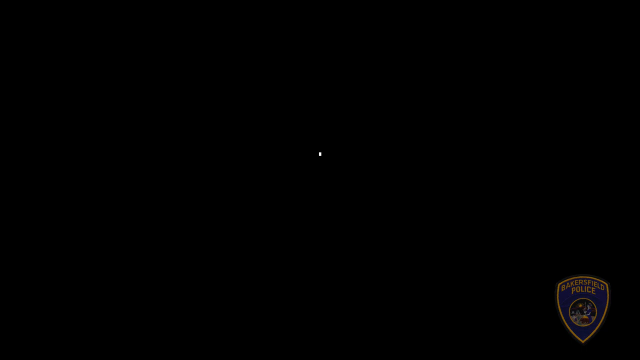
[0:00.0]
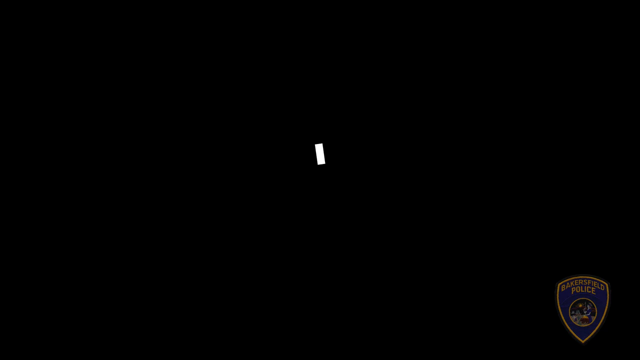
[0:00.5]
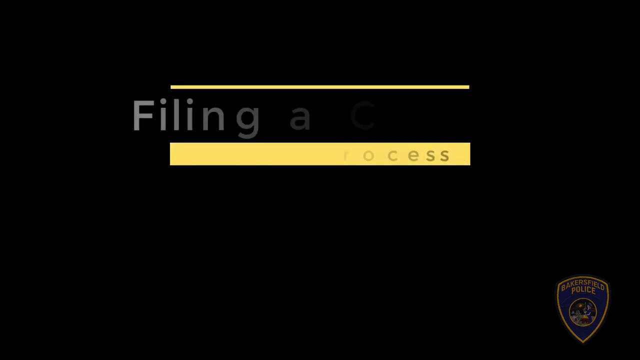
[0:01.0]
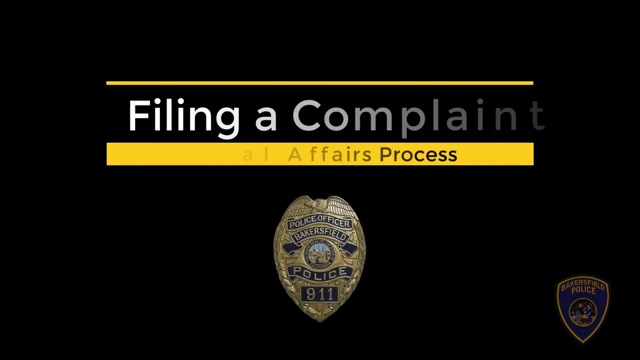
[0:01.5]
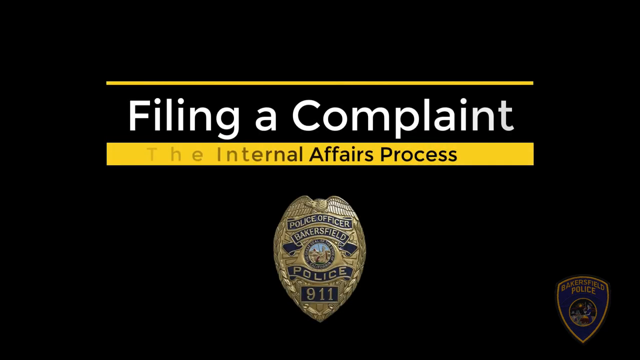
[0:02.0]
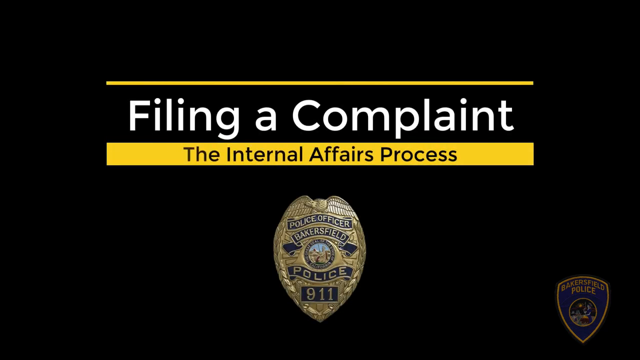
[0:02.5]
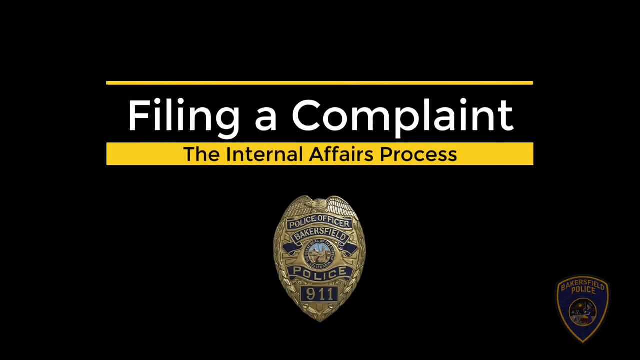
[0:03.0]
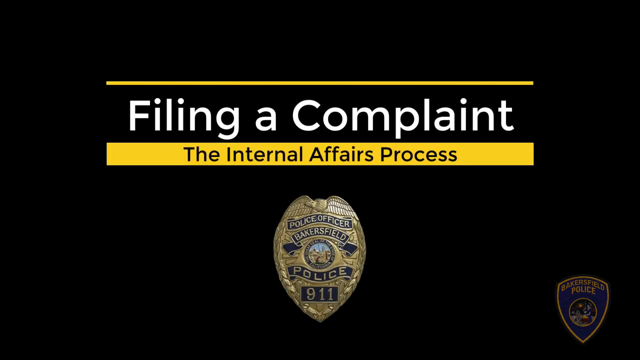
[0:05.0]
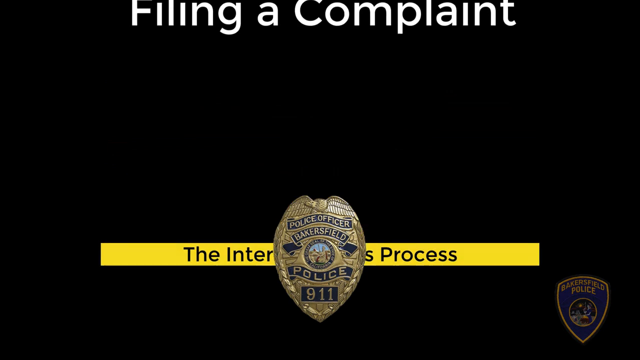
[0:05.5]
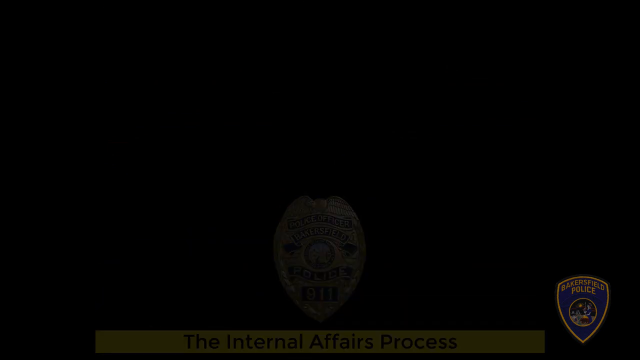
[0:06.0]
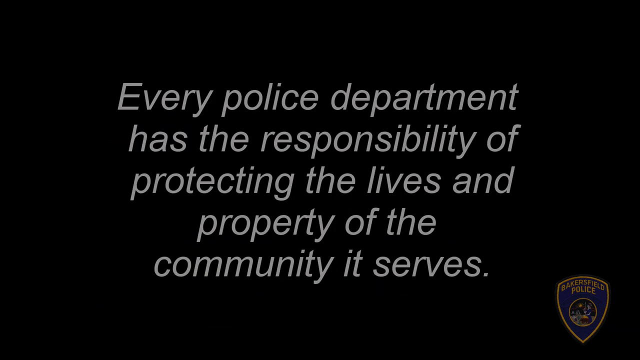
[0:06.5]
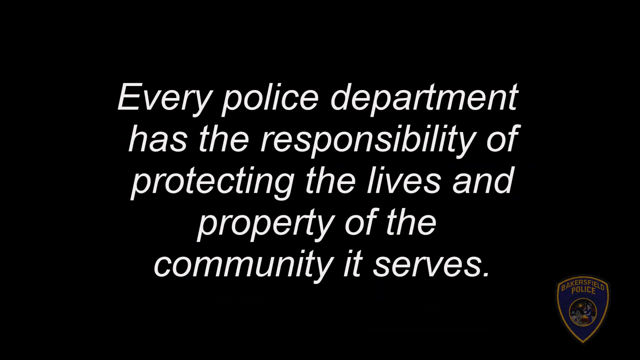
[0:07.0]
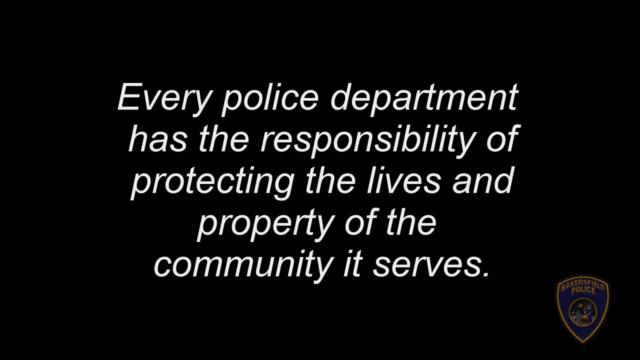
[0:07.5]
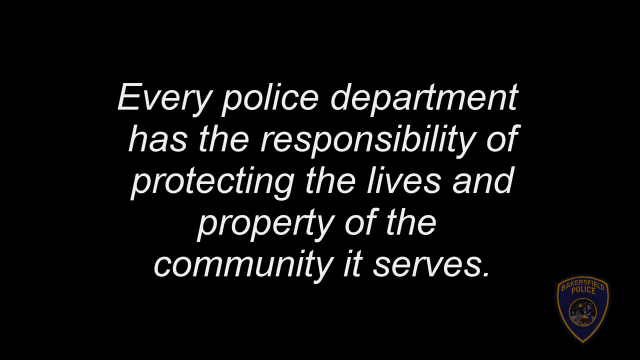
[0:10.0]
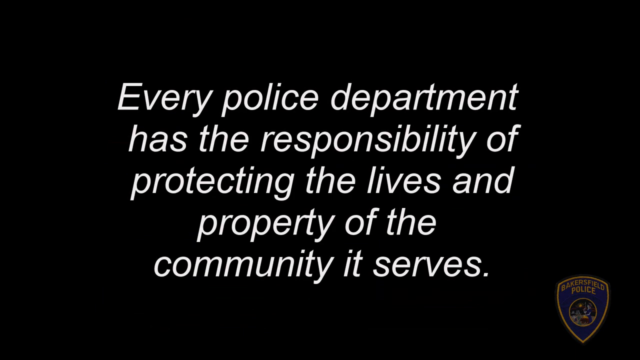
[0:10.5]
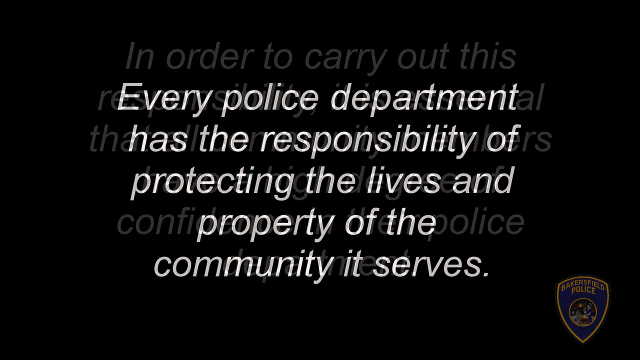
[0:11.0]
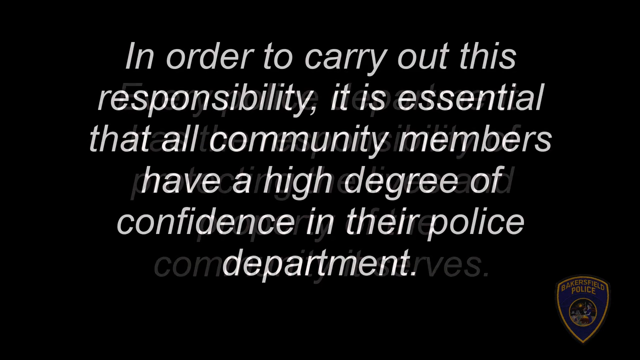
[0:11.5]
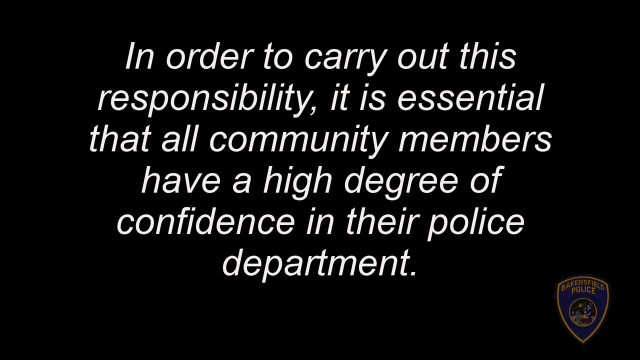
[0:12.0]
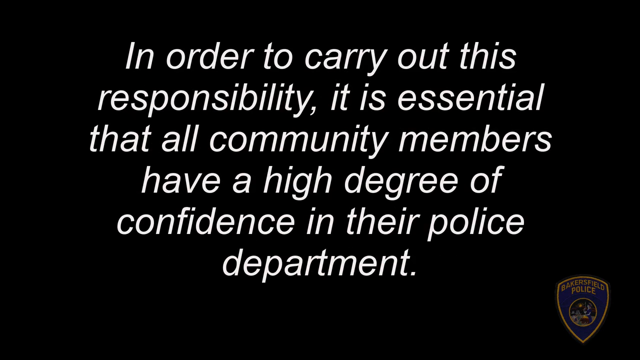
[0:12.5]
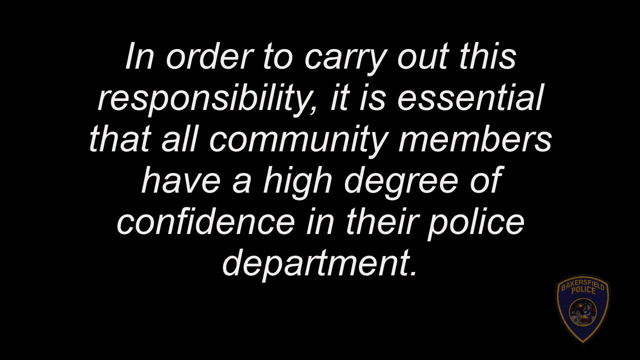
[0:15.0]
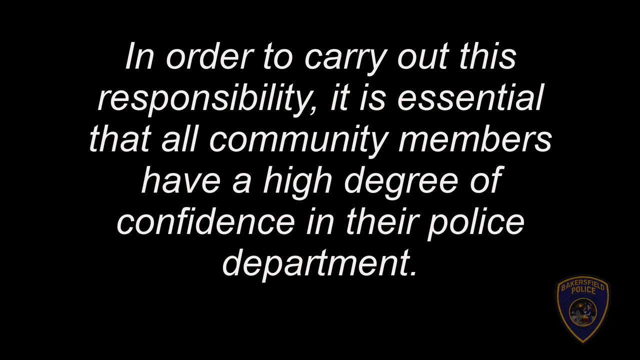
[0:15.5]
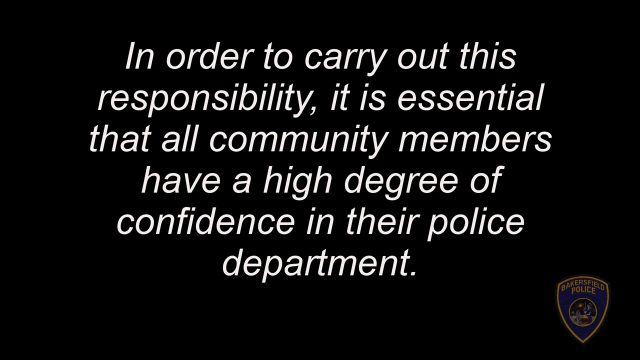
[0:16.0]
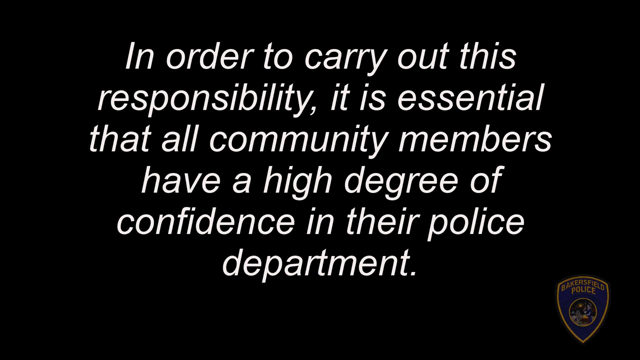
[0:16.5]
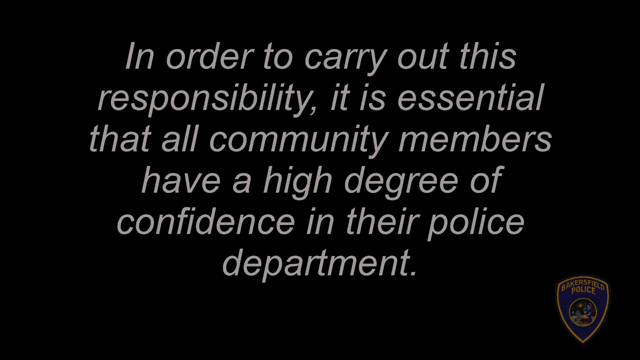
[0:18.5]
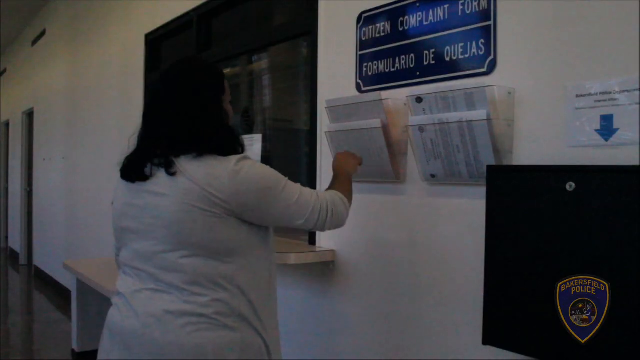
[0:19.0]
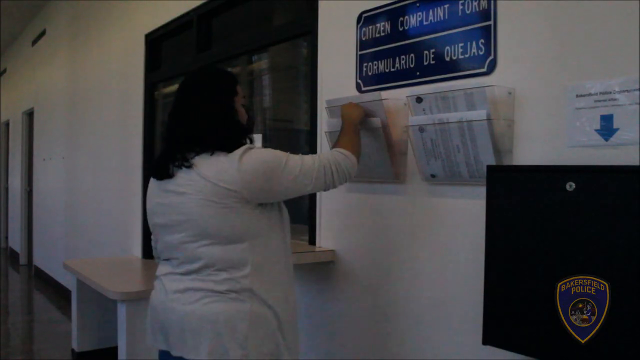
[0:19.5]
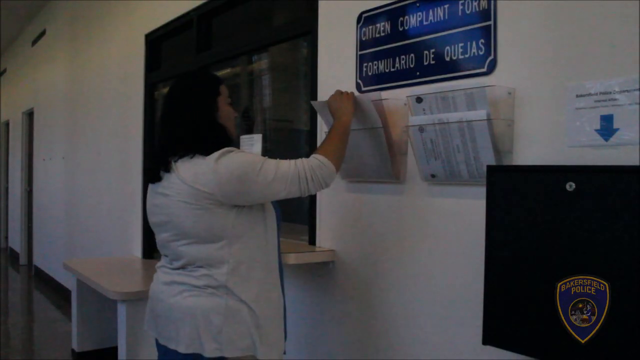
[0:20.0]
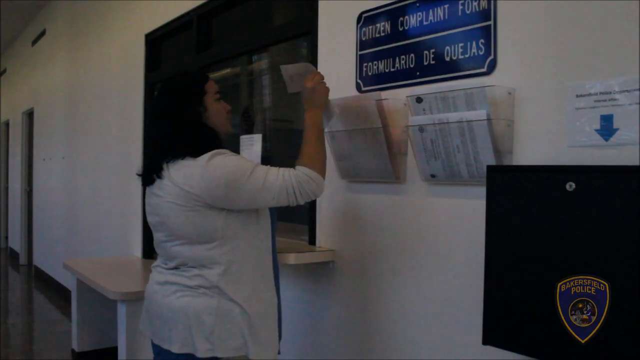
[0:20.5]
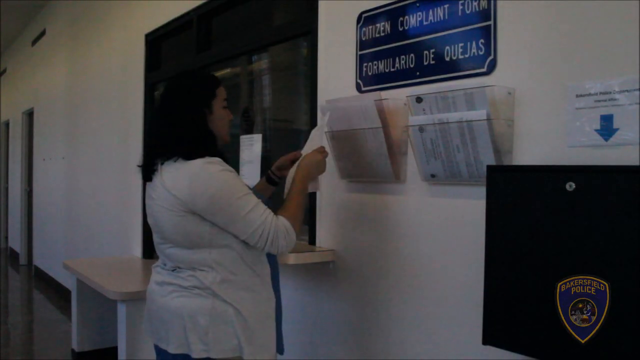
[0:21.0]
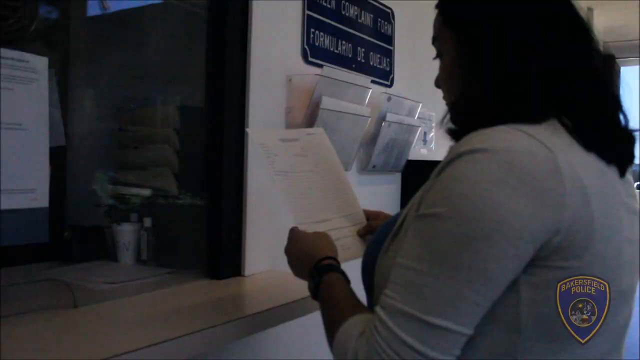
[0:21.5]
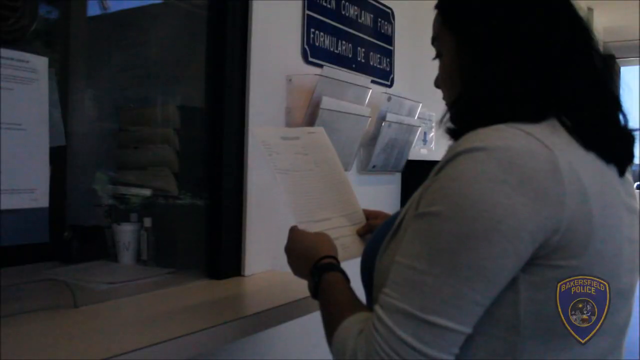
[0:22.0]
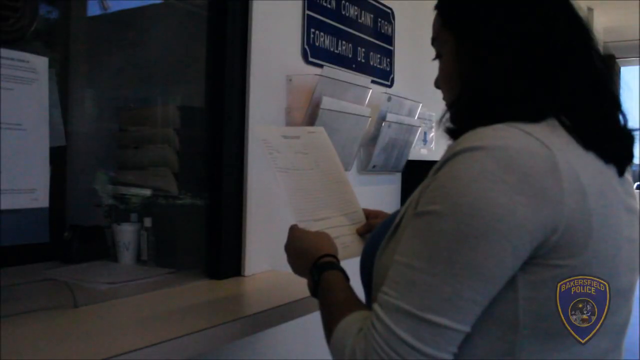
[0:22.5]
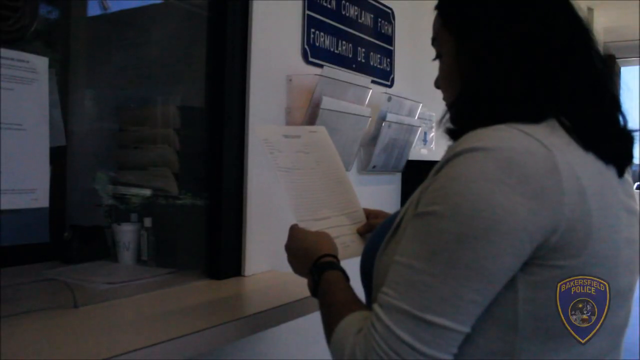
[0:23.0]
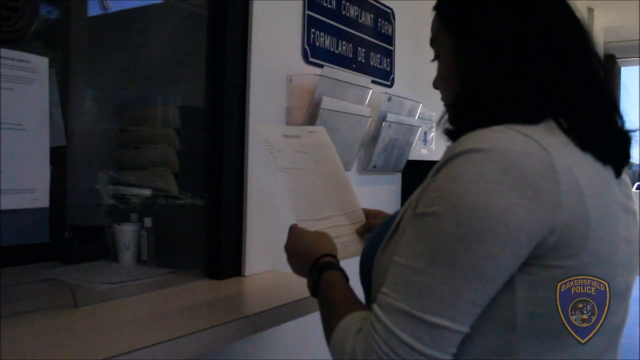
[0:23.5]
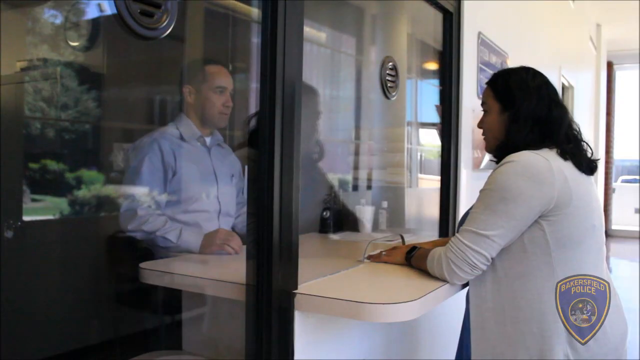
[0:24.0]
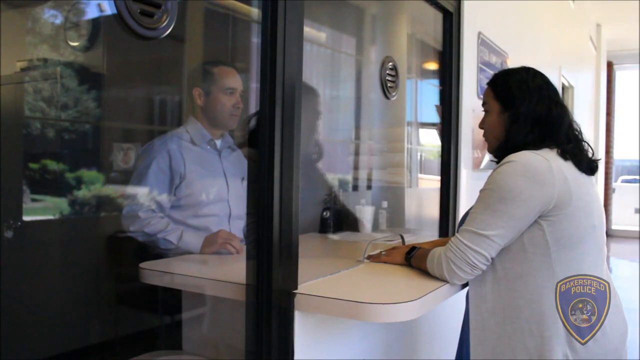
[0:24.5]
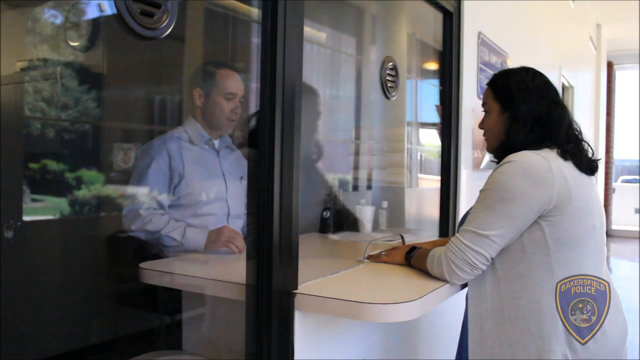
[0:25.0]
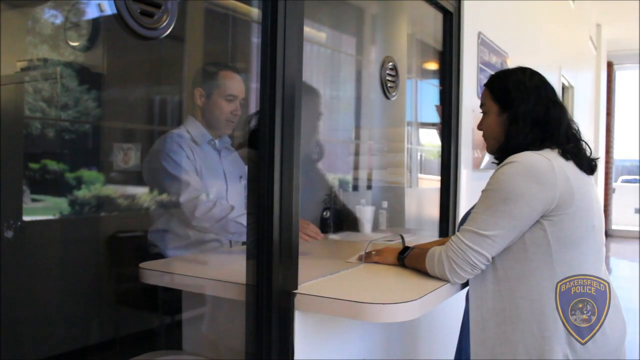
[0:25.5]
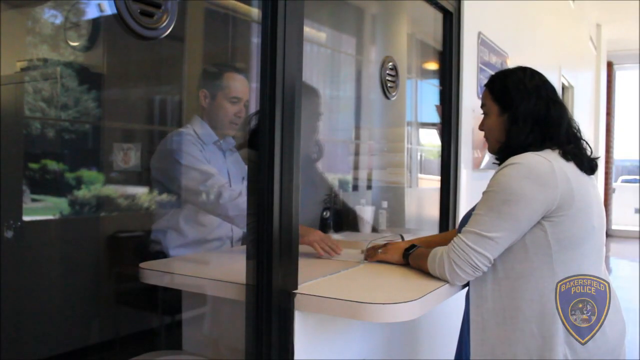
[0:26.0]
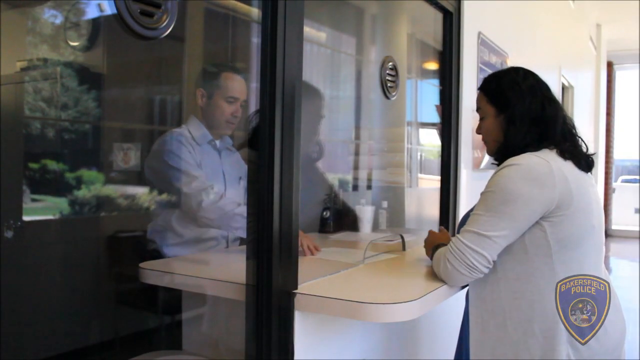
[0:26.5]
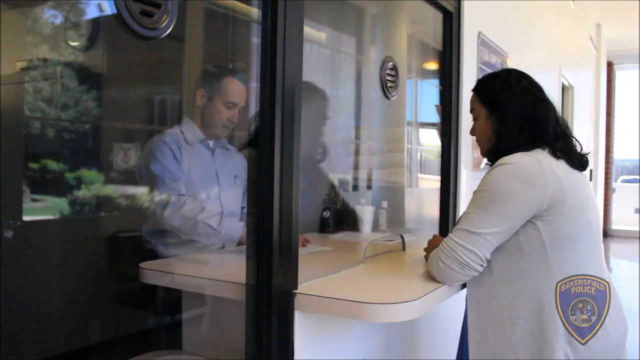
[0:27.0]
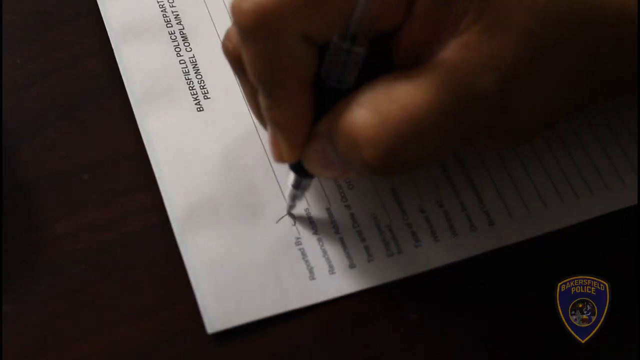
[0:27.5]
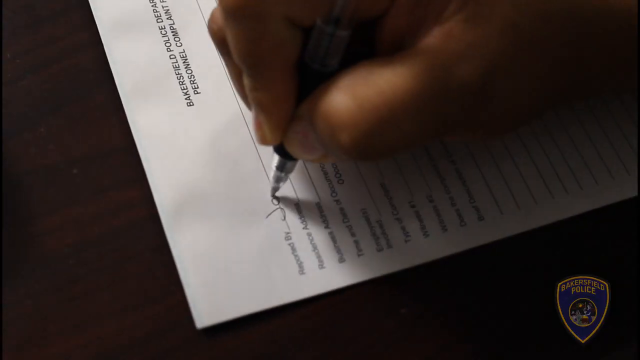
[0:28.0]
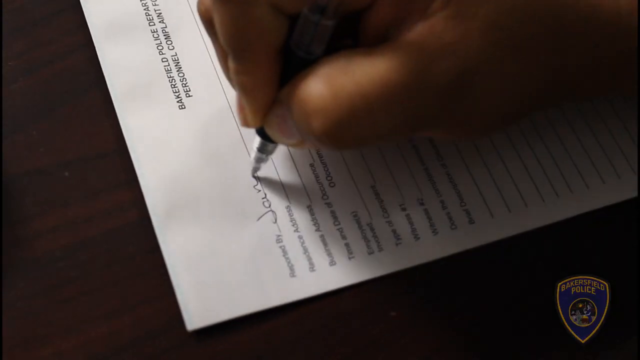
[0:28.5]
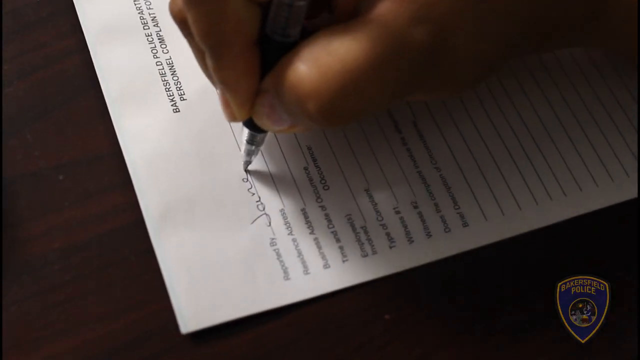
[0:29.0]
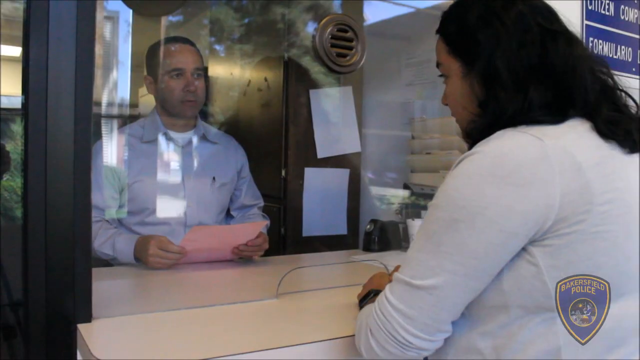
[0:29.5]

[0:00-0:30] The video opens on a black screen, then text appears: "filing a complaint" at the top in white lettering, and below that "the internal affairs process" in yellow. A shield from a police department is shown; it is the badge of a police officer of the Bakersfield Police Department, with 911 listed on it. White text on black then reads "every police department has a responsibility of protecting the lives and property of the community it serves." Next, text begins "in order to carry out this responsibility is essential that all" and continues "community members have a high degree of confidence in their police department." An image then shows a woman wearing white at a sort of plastic paper file kiosk or holder, with "citizen complaint forms" written above it. The woman is looking at a paper she has taken out of it, which seems to be a blank form.